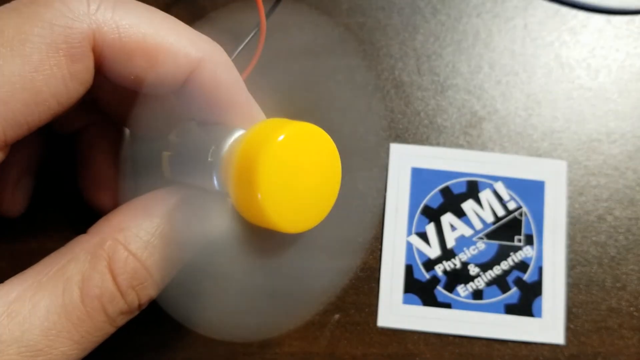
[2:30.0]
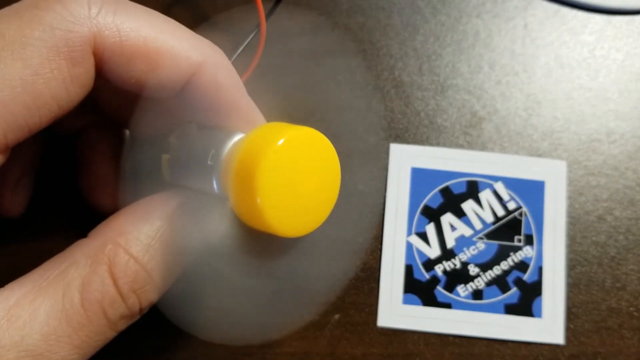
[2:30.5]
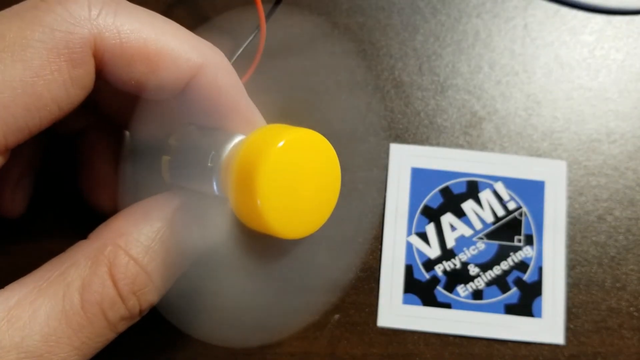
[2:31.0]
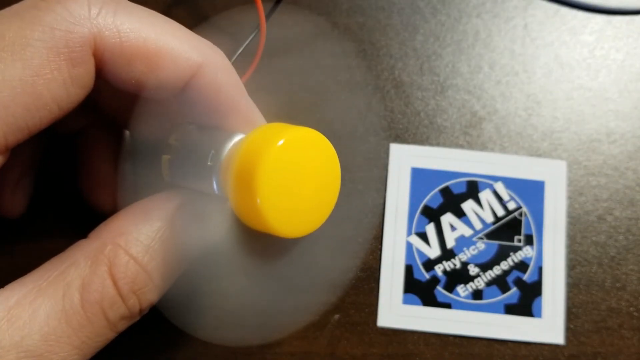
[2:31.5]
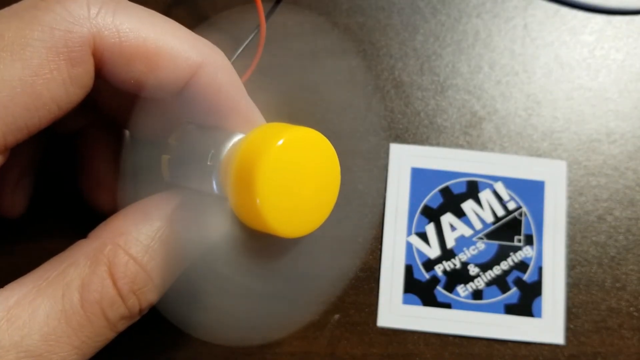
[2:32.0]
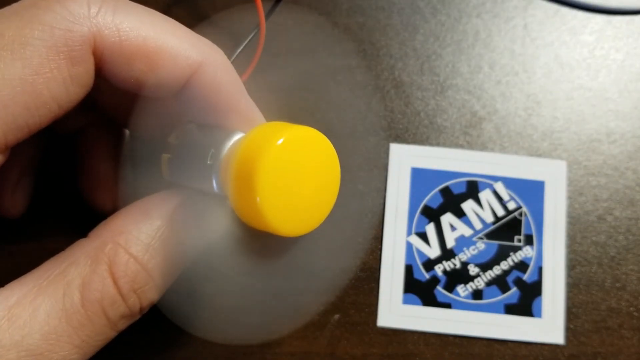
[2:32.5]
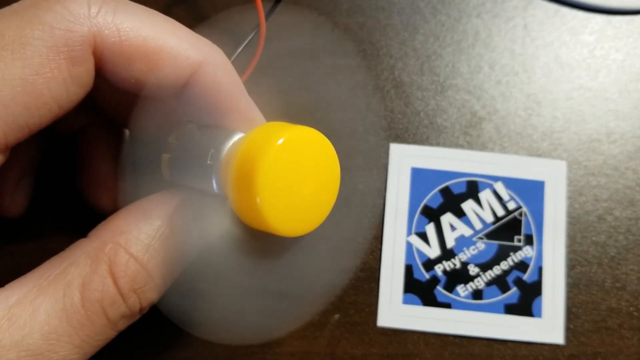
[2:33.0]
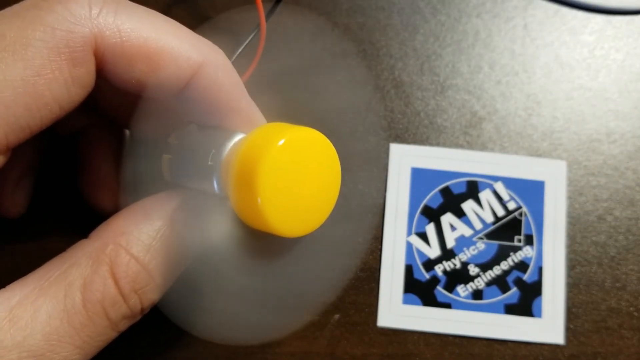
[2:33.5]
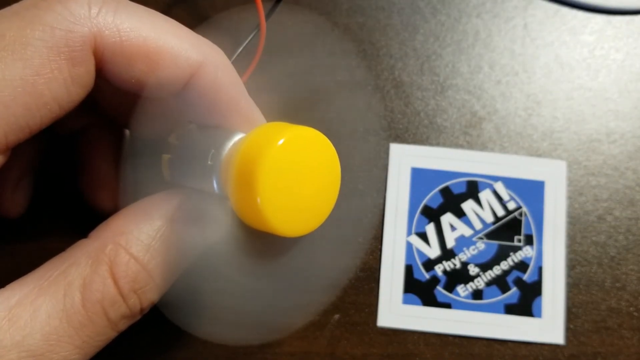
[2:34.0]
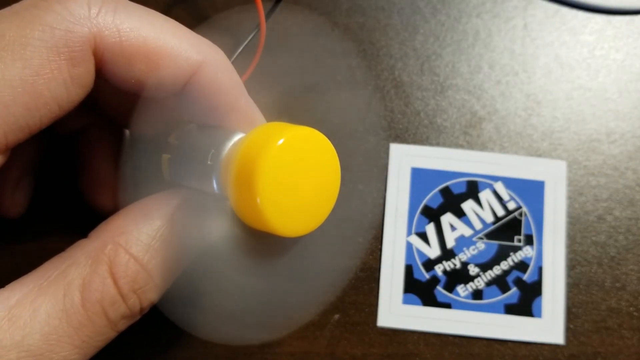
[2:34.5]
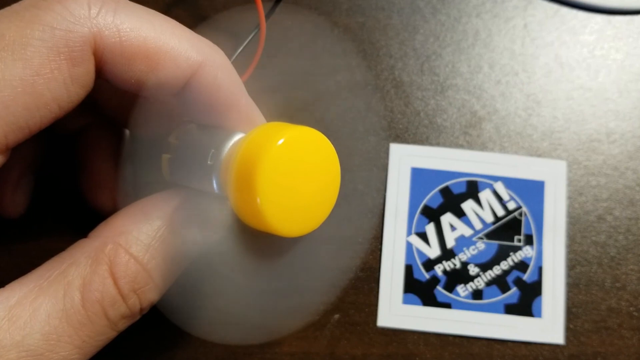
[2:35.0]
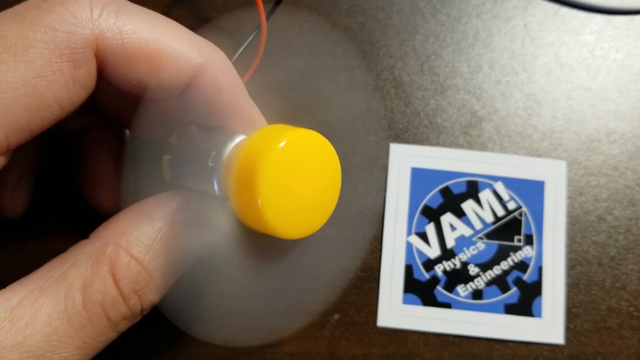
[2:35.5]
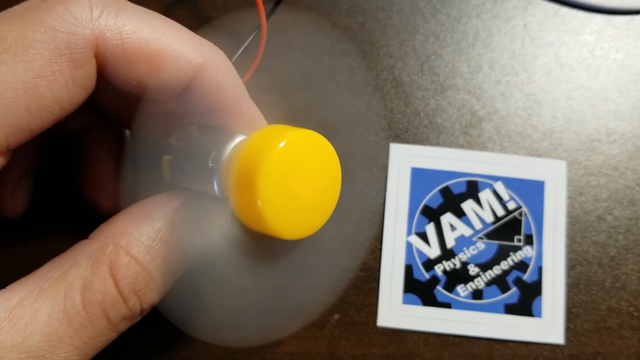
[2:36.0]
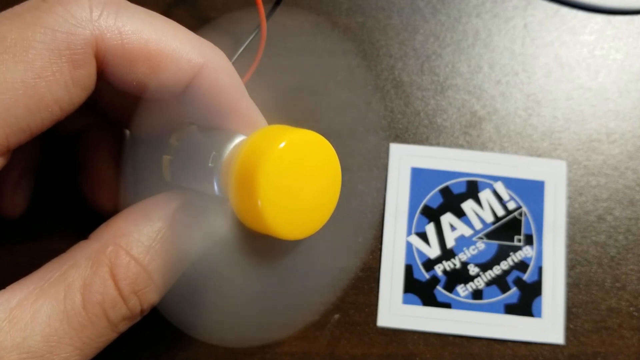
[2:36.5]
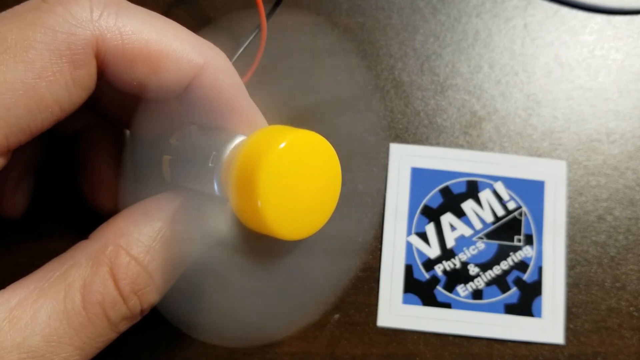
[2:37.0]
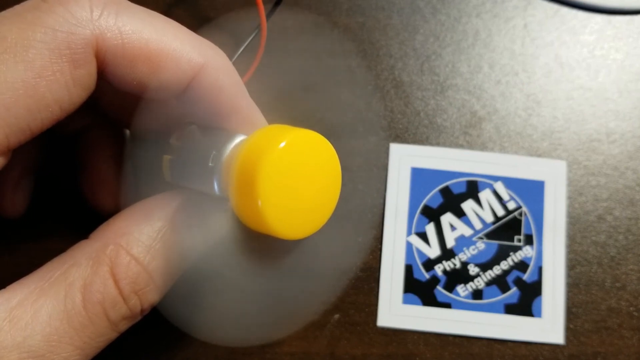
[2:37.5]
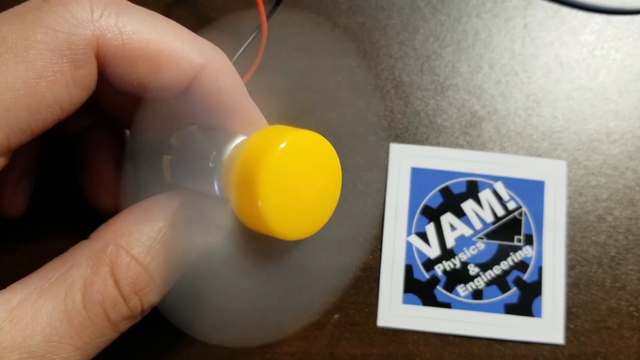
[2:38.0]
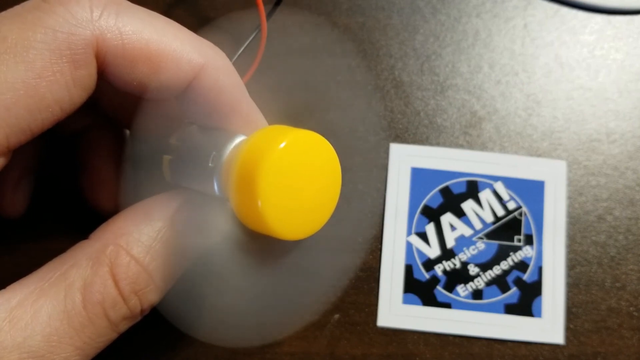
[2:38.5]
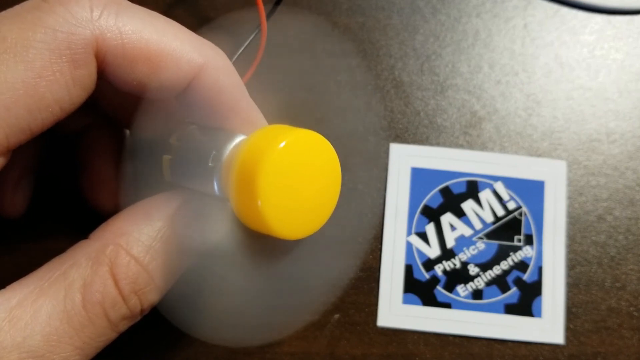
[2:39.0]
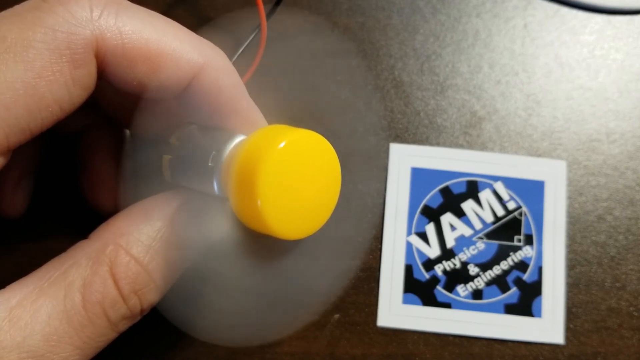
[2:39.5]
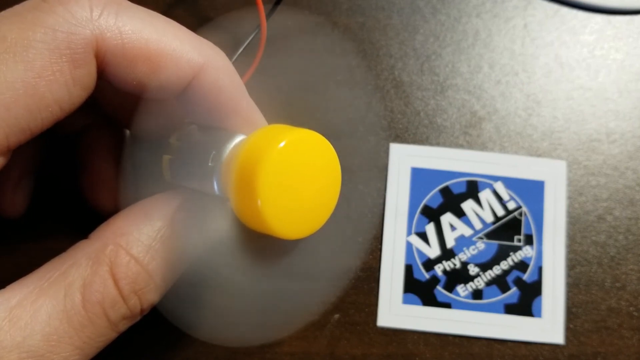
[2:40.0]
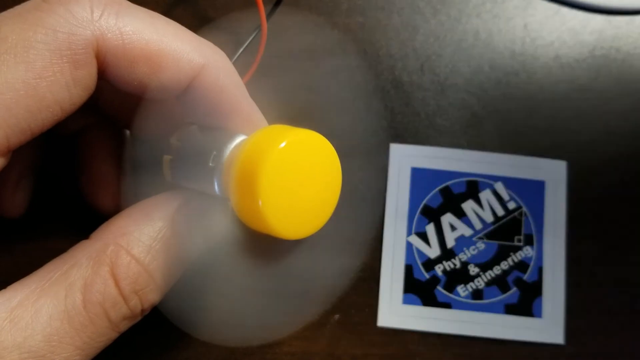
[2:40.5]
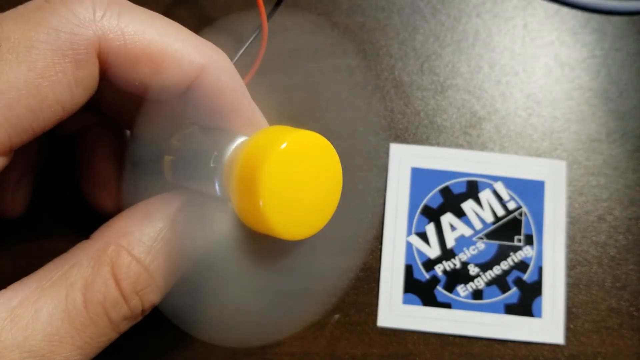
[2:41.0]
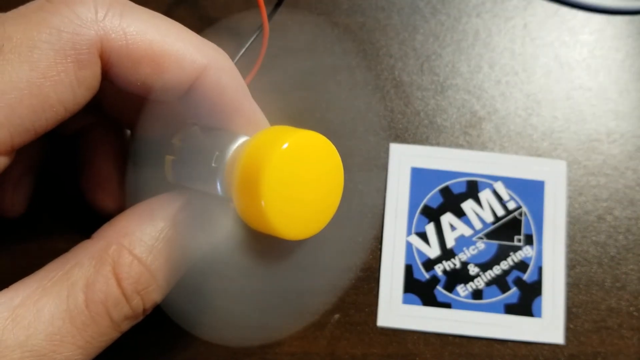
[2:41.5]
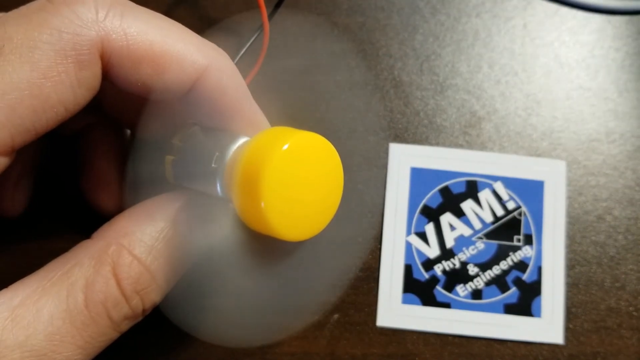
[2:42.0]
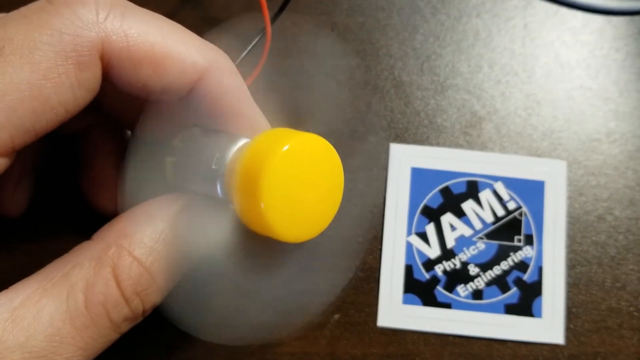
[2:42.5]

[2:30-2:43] The experiment, run using a motor, continues with instructions. Input A and instruction B are shown as the input needed to run the motor, followed by the output, "run the motor". The motor, which is colorless with some yellow on it, runs while fingers touch it. It keeps running for a while, then stops.